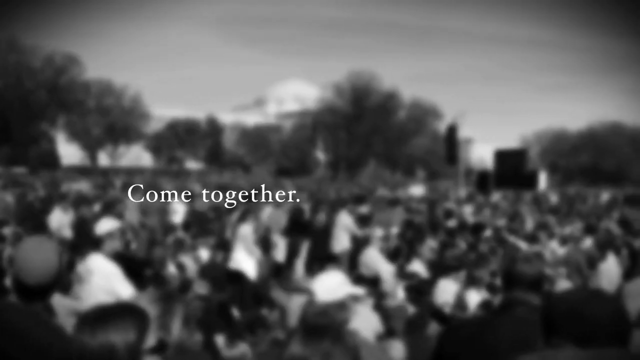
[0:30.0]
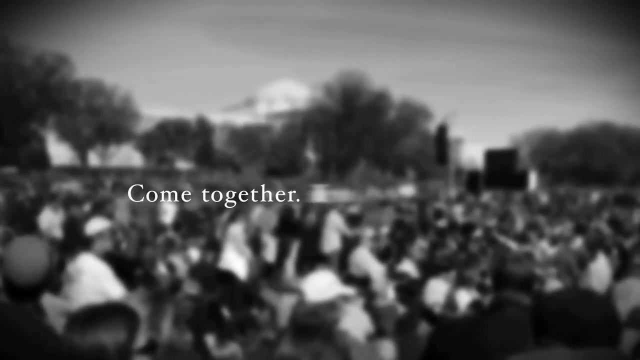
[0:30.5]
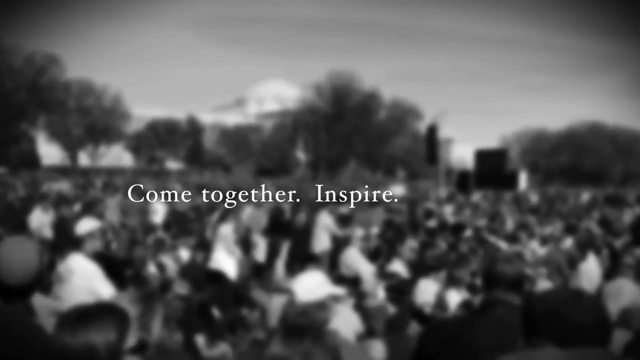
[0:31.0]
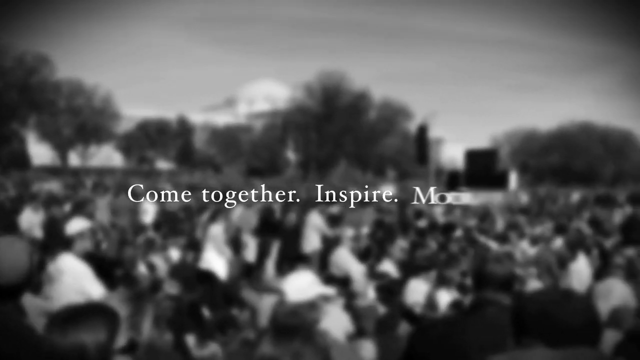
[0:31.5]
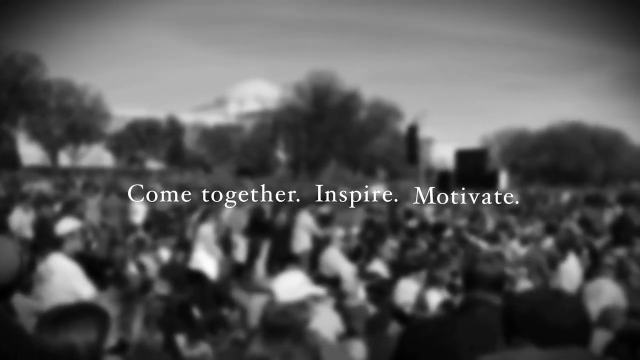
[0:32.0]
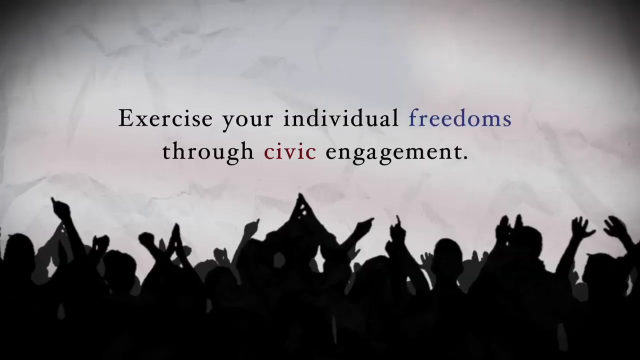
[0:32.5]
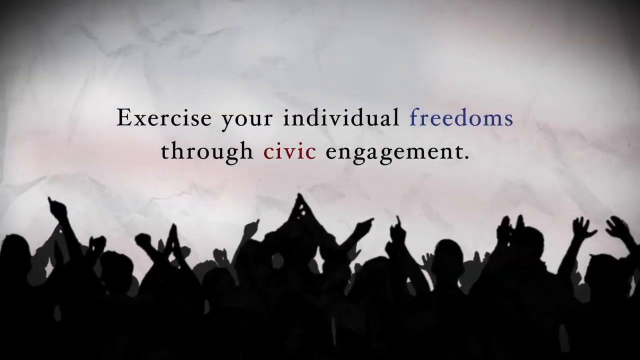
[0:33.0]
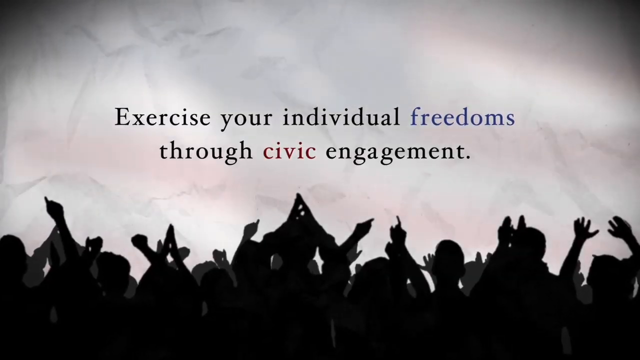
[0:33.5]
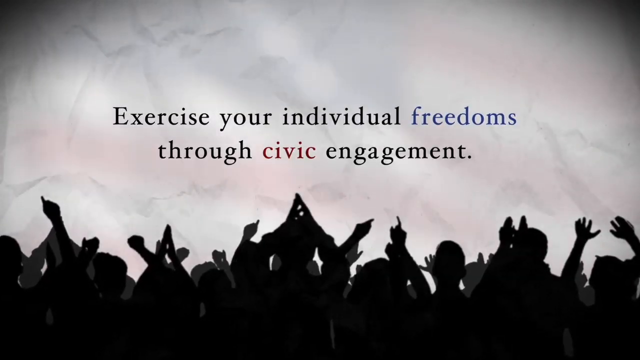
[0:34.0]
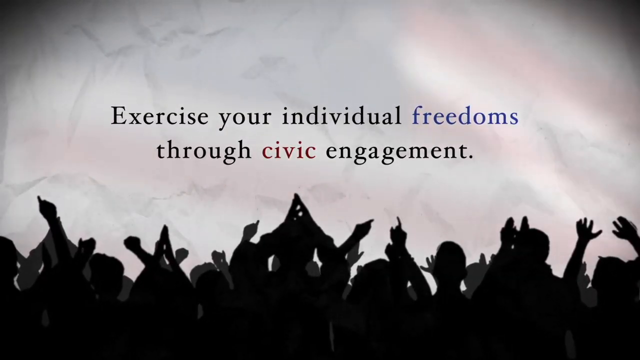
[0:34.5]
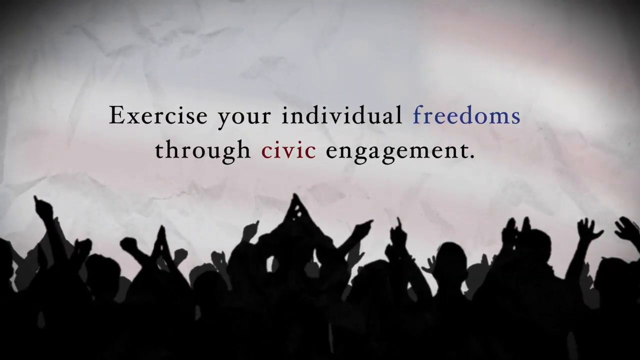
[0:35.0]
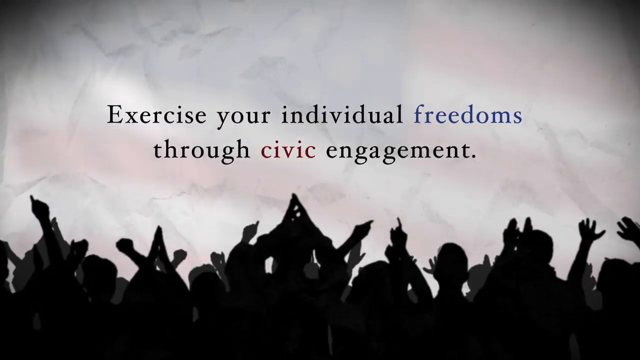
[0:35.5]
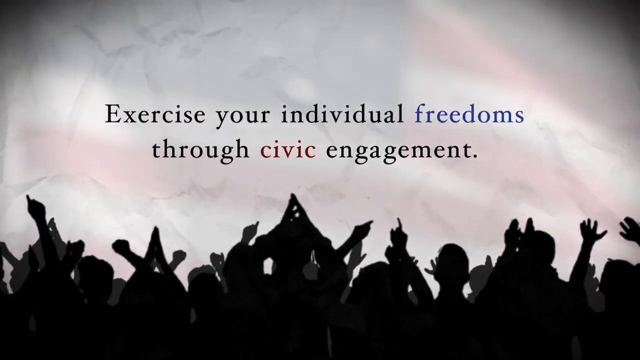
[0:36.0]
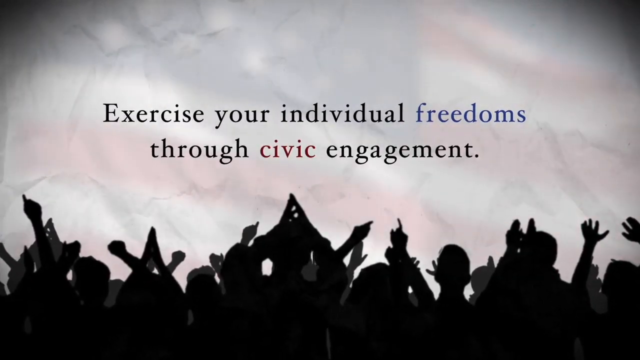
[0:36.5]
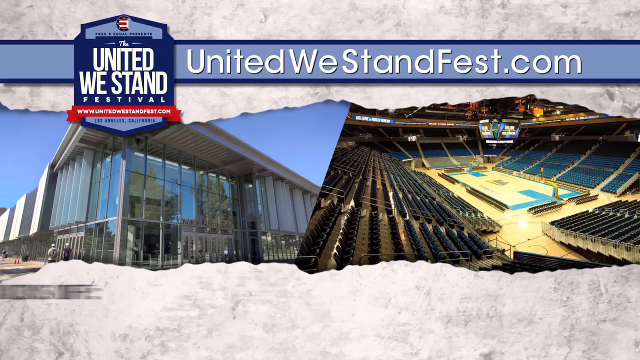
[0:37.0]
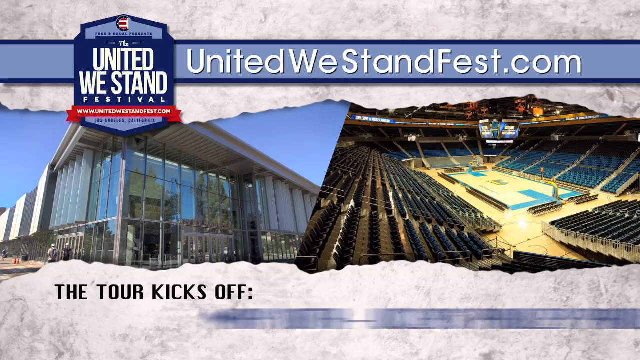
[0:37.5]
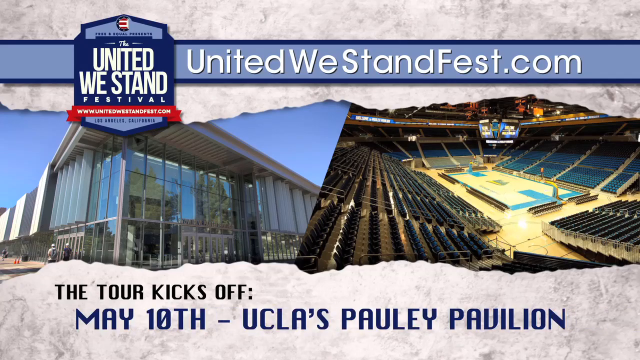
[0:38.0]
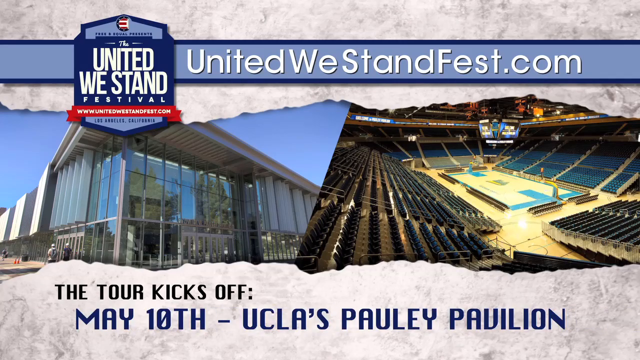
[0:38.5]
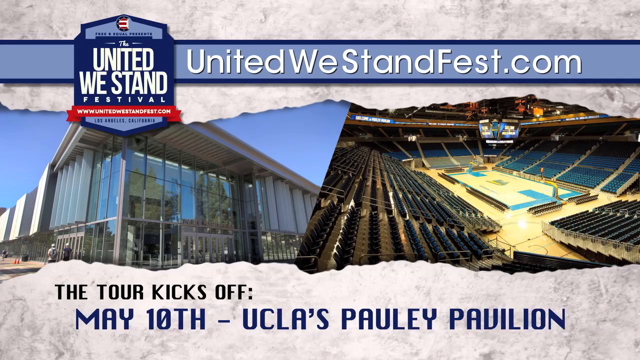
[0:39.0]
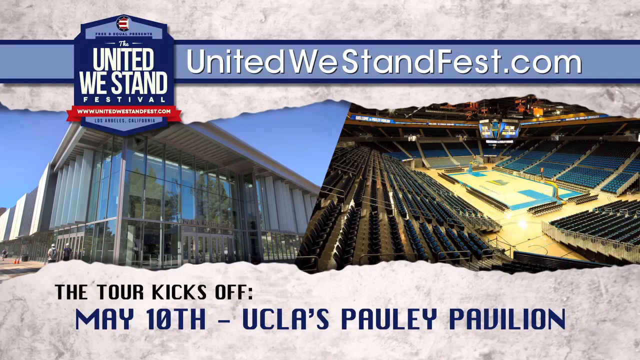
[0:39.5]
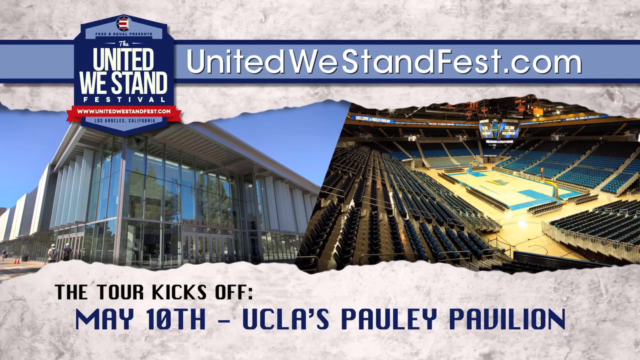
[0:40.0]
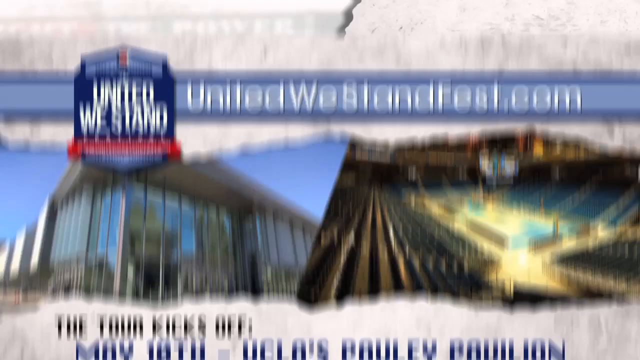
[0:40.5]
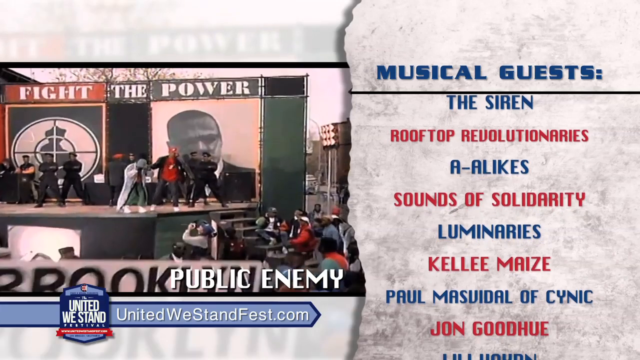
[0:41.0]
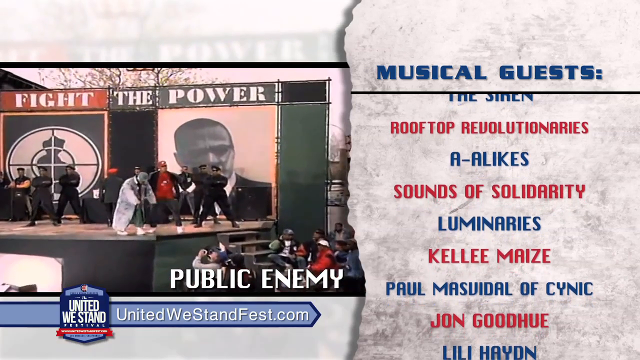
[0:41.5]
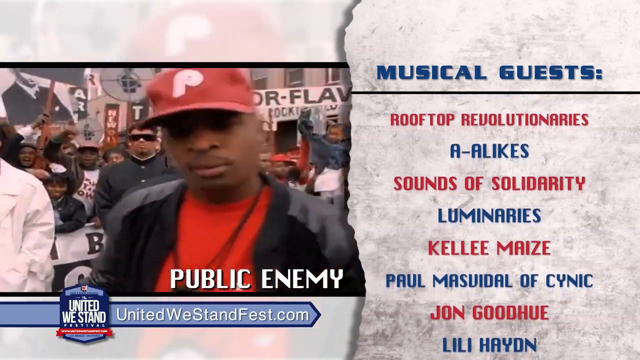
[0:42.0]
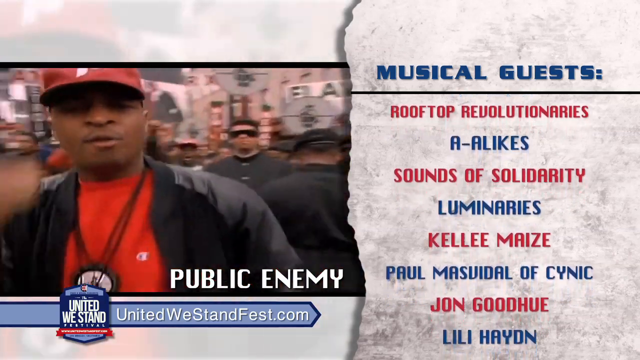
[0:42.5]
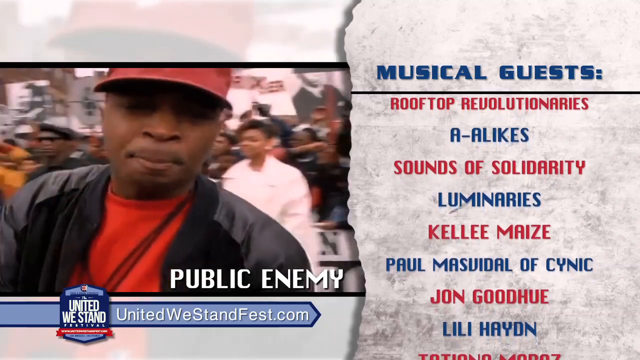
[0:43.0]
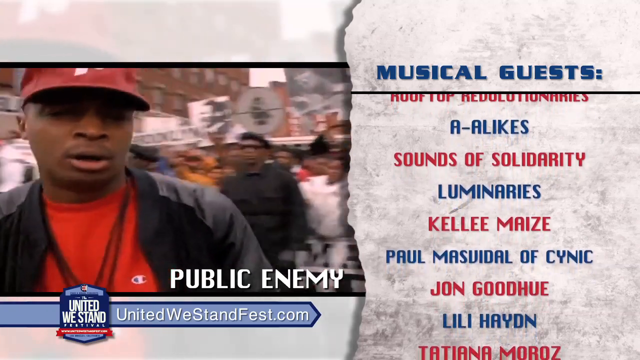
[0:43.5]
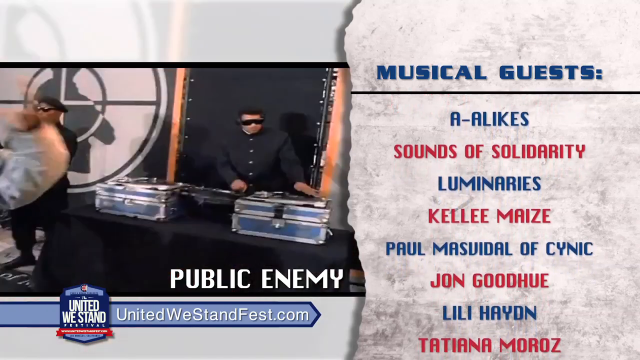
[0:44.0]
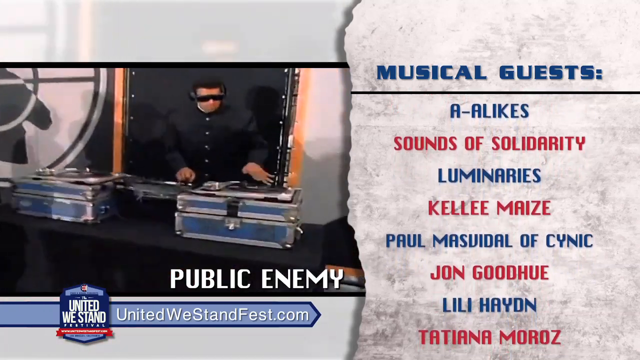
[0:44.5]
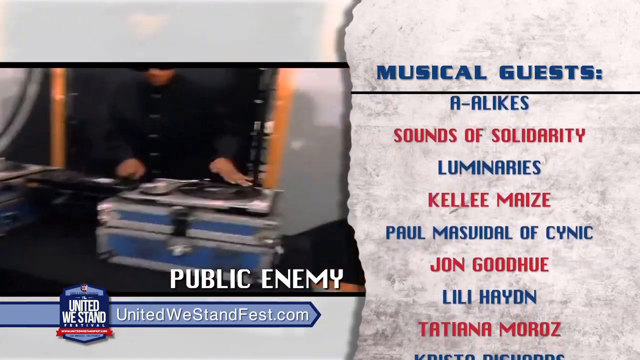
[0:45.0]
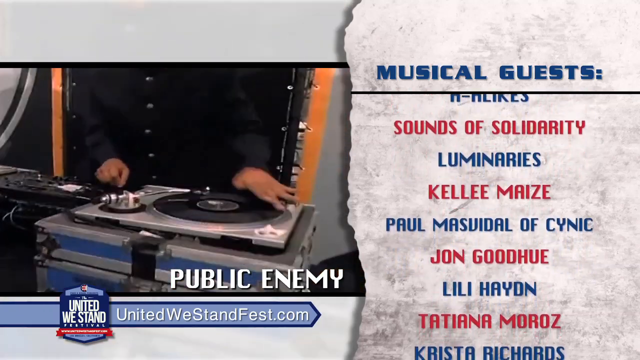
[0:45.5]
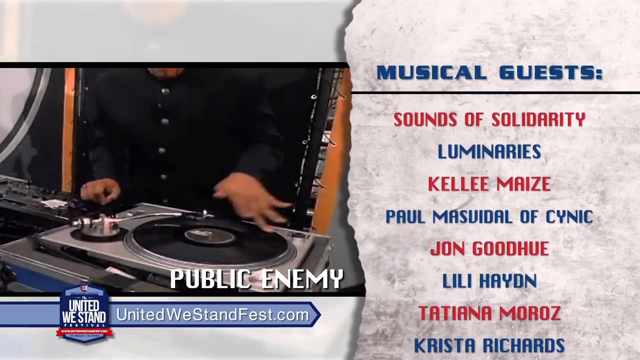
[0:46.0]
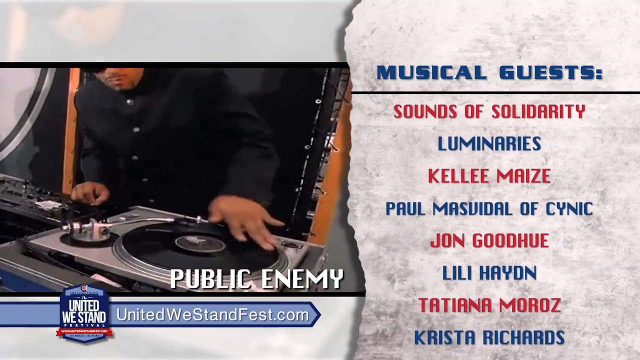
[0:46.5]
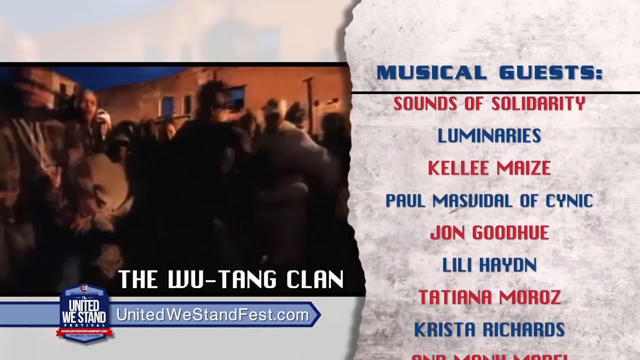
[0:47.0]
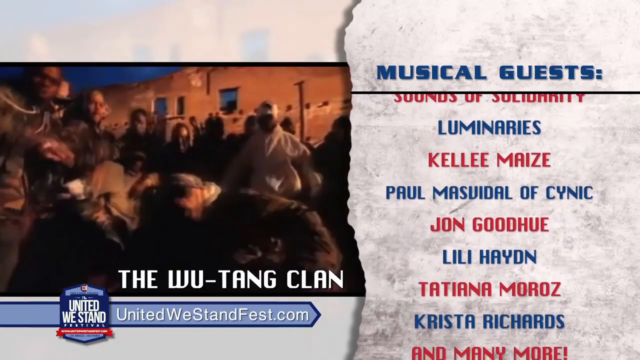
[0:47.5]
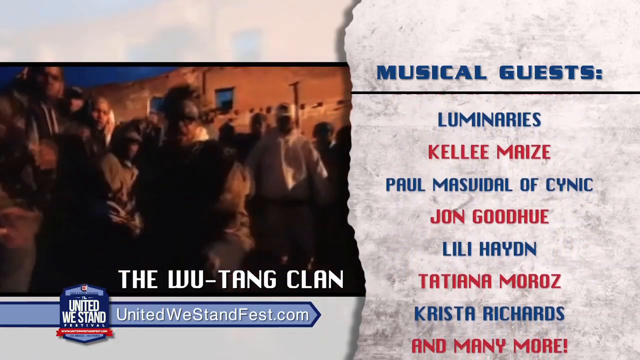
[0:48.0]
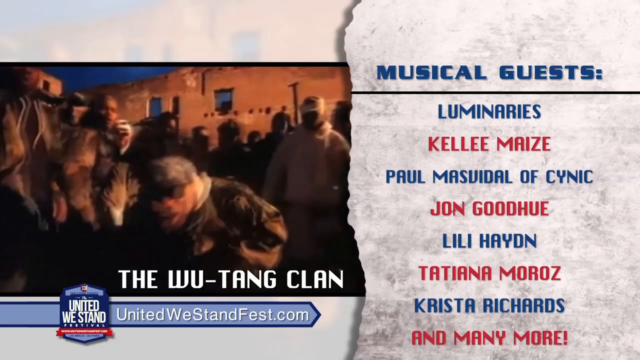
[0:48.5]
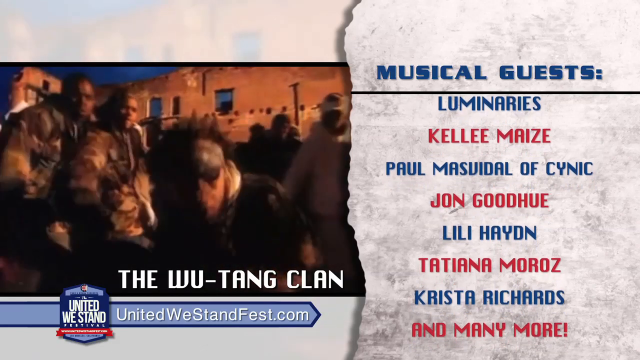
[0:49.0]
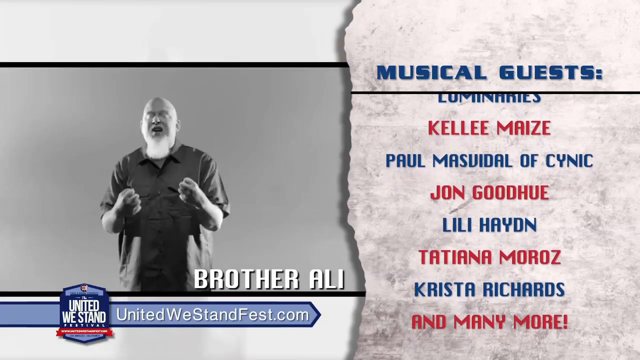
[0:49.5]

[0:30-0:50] The video says "come together, inspire, motivate, exercise your individual freedom through civic engagement" and "united we stand." A lot of people are shown, apparently going to a meeting. Musical guests are announced.